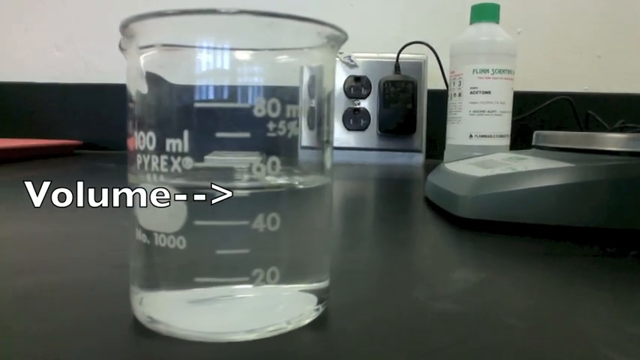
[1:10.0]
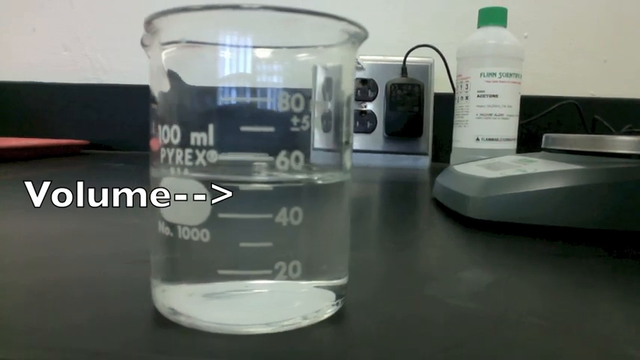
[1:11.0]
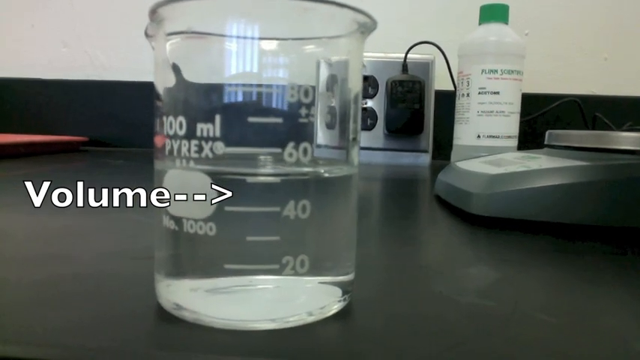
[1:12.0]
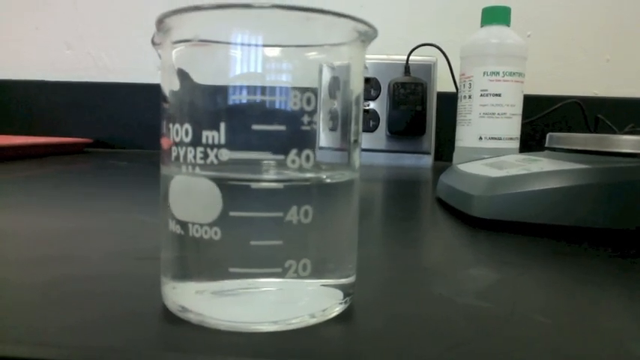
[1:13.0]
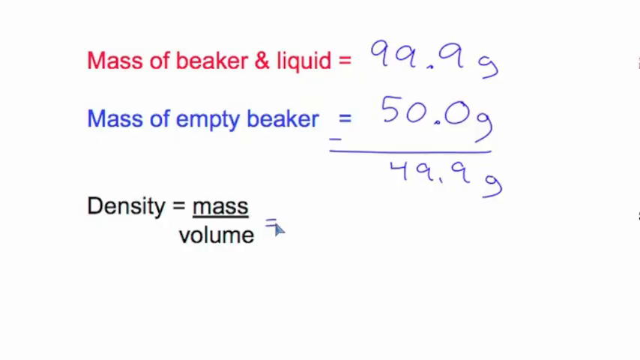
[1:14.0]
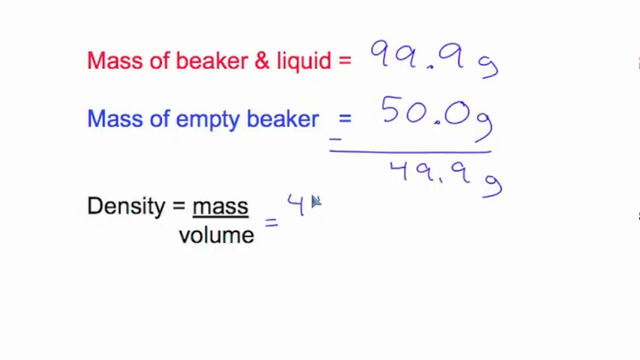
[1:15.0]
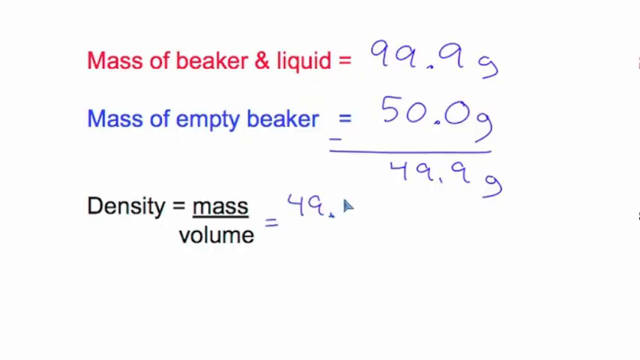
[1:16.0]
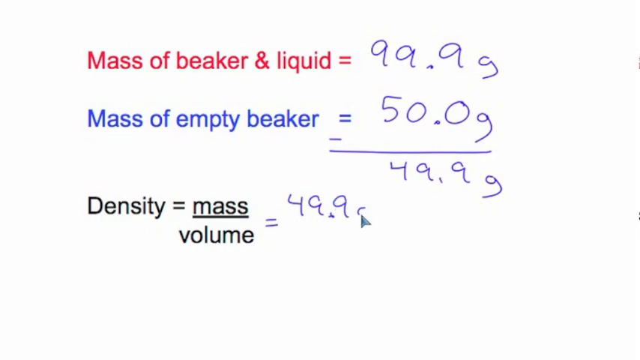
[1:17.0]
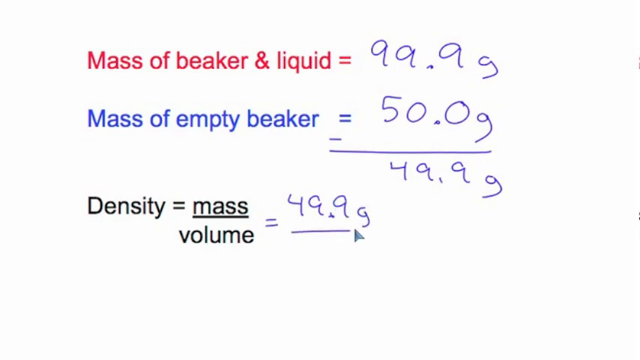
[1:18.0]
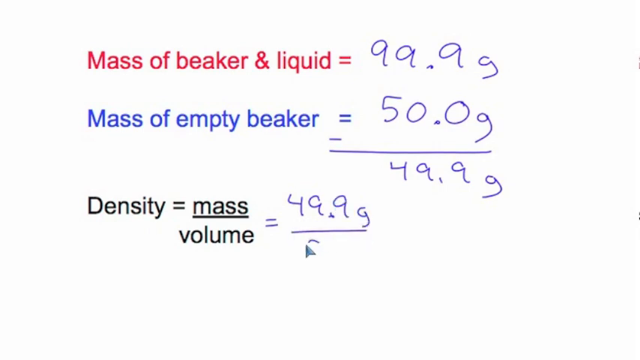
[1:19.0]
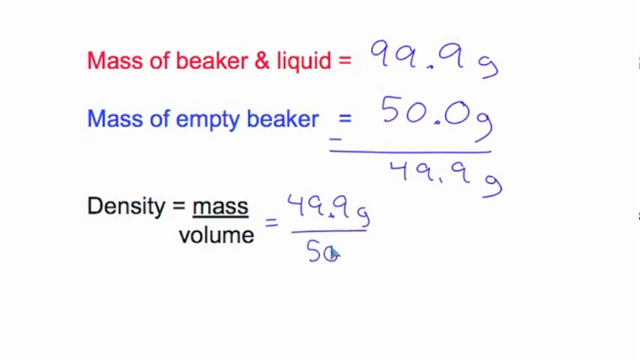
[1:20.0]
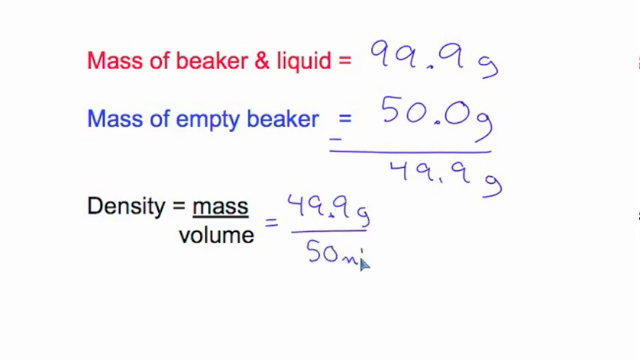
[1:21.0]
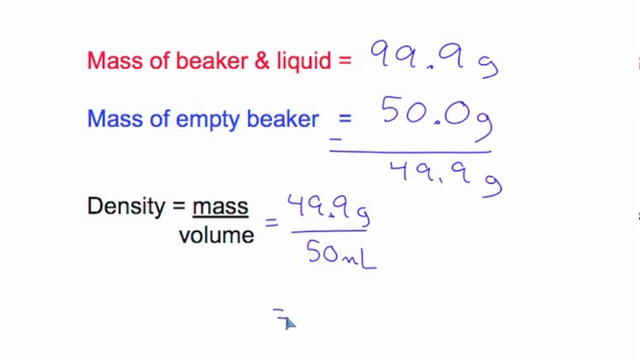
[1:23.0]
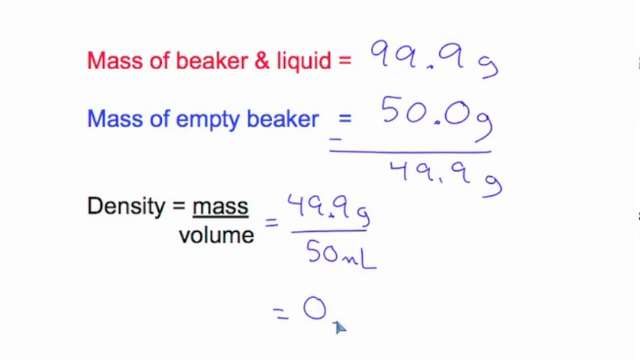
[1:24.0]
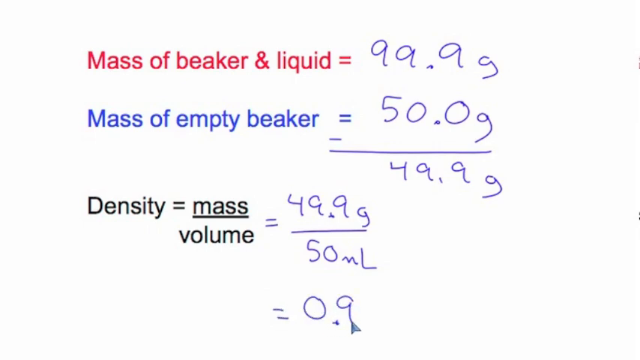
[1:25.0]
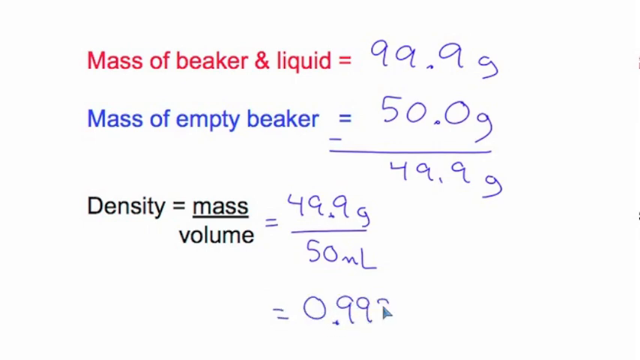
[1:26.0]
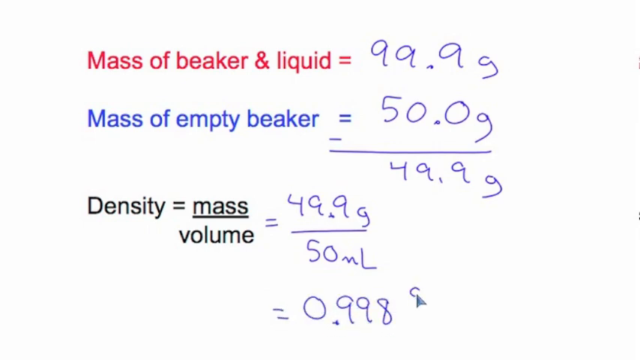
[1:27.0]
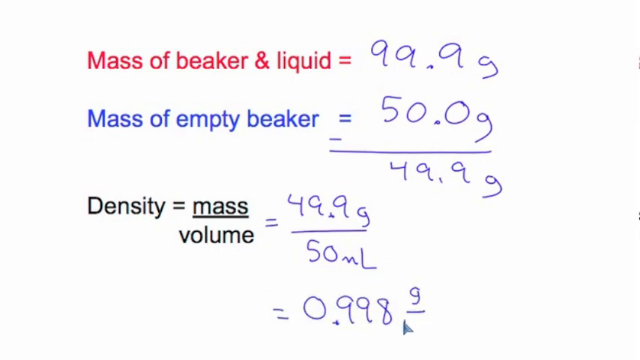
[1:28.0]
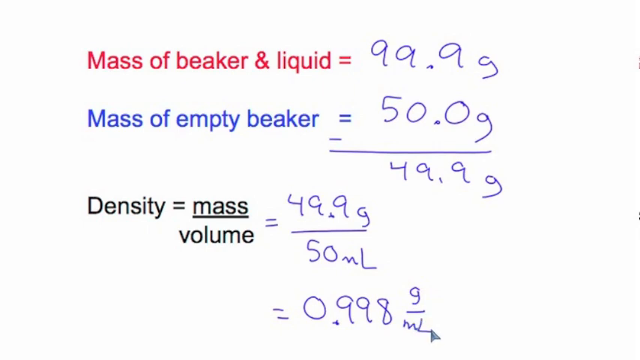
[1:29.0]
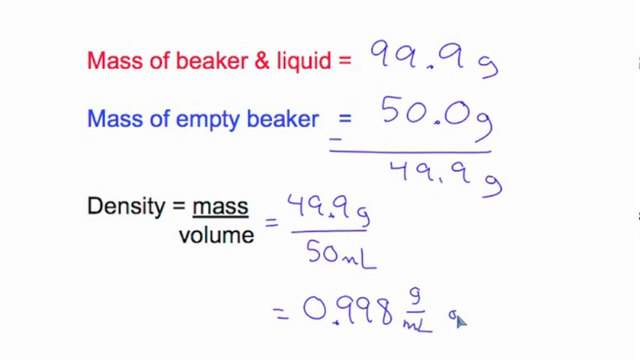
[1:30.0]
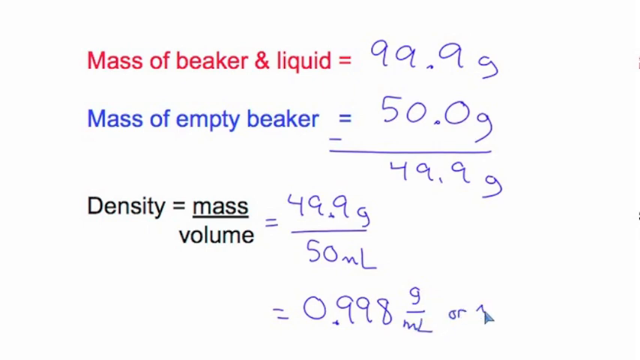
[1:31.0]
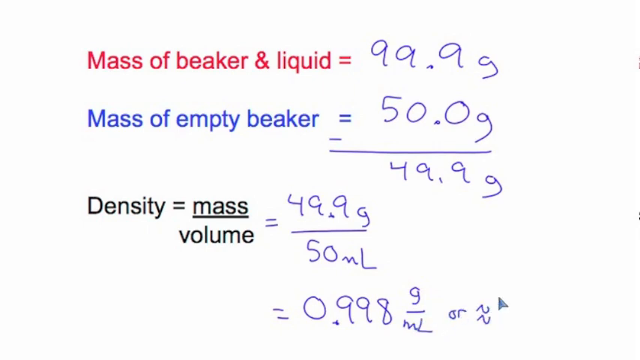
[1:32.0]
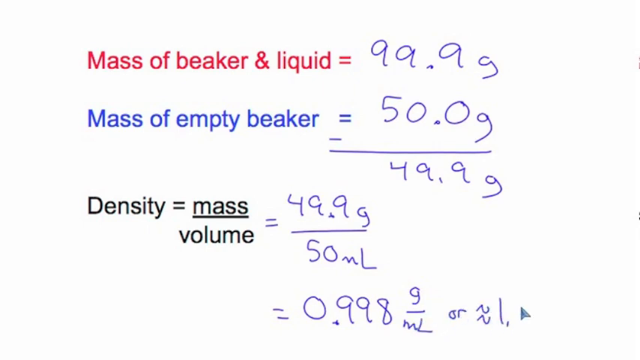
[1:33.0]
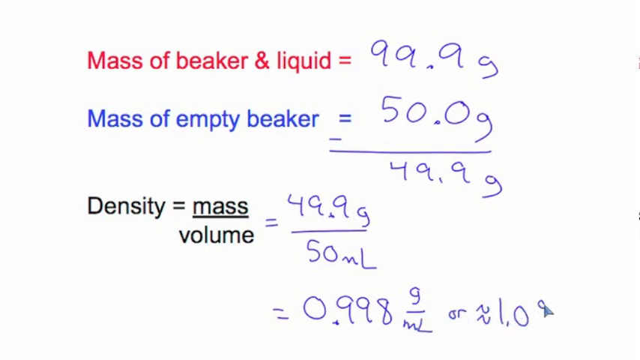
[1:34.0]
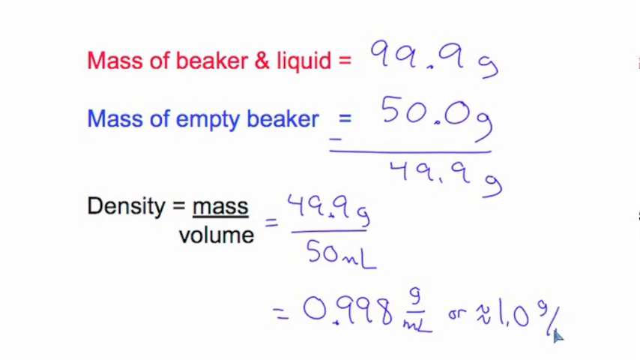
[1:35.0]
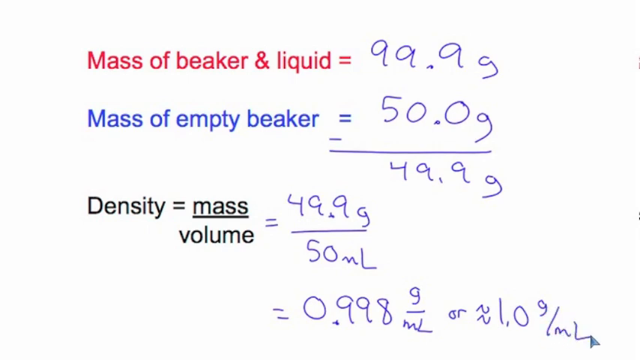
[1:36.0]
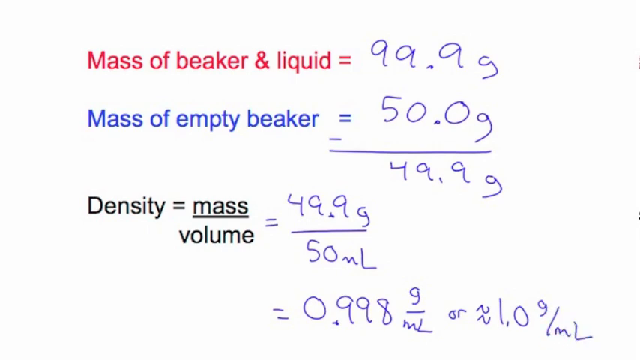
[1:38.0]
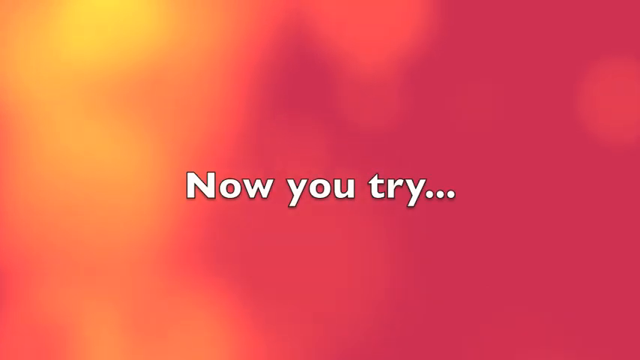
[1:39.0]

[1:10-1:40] A glass beaker is on a black surface. On the right is a scale facing toward the left side of the screen. There is also a white plastic bottle with a green top, and there appear to be silver outlets on the wall with something plugged into them. The beaker has four numbers on it: 20 at the bottom, then 40, 60 and 80 above. There is a large line to the left of each number and a small line between each of the lines. The word "volume" appears with an arrow pointing to about the 45 or about the 50 mark. The video then goes to the white screen, which reads "mass of beaker and liquid equals 99.9 g", below that "mass of empty beaker equals 50 g", then a minus mark and a line giving "49.9 g". On the left side below that it reads "density equals mass volume"; an equal mark is drawn, followed by "49.9 g", which is underlined, then "50 ml" and a result of "0.998 g" per milliliter. It then goes back to the home screen, which says "now you try".